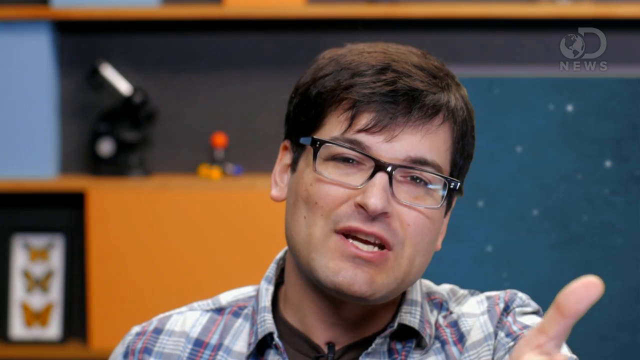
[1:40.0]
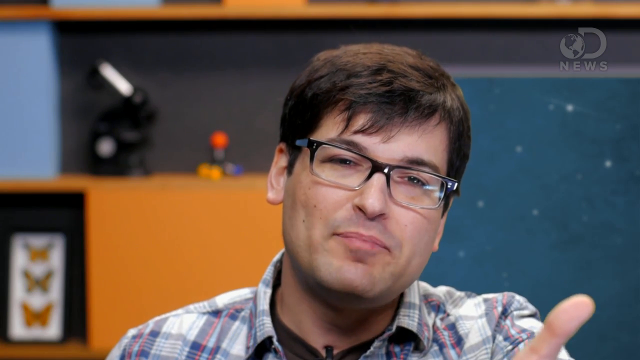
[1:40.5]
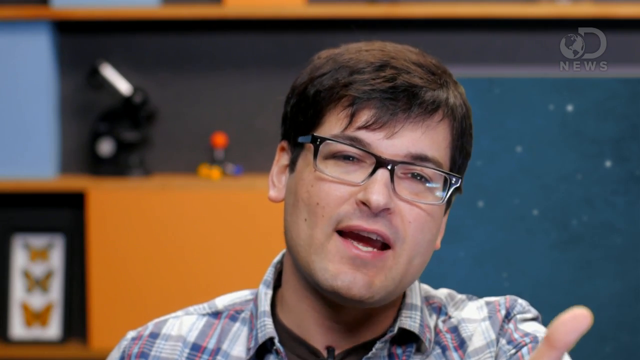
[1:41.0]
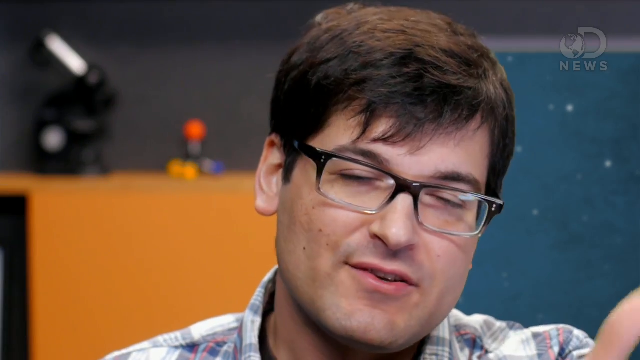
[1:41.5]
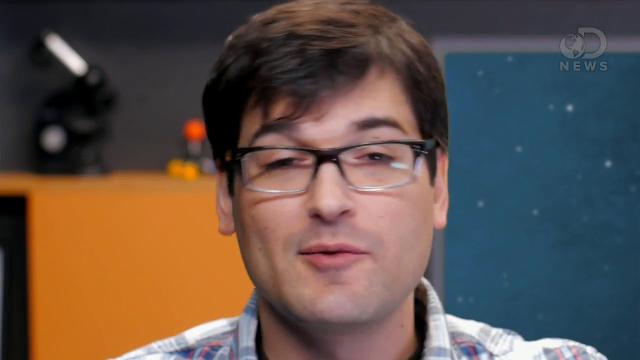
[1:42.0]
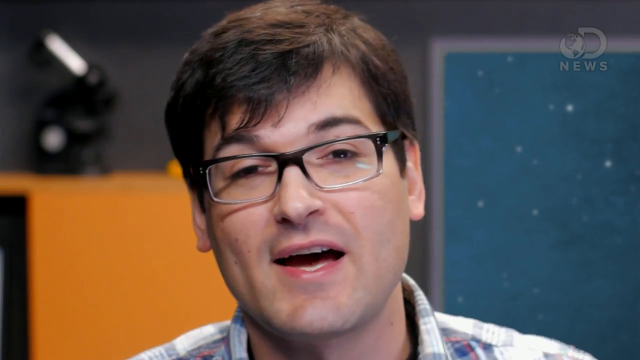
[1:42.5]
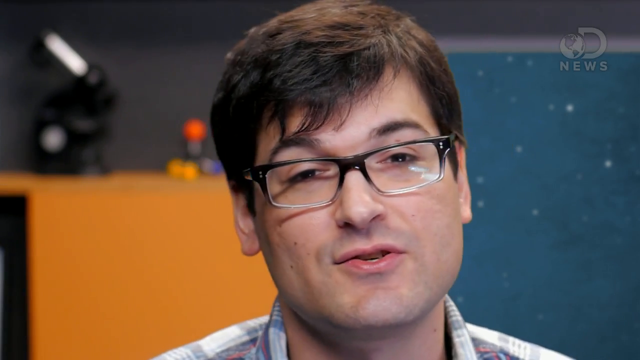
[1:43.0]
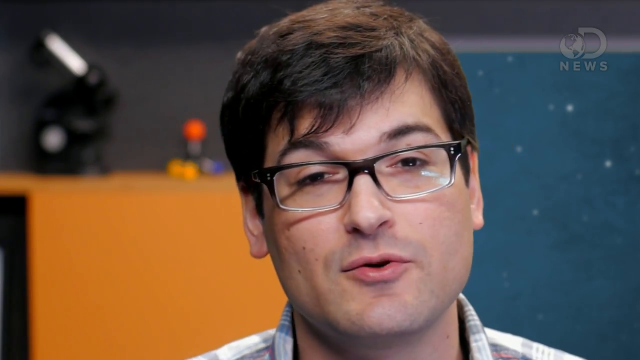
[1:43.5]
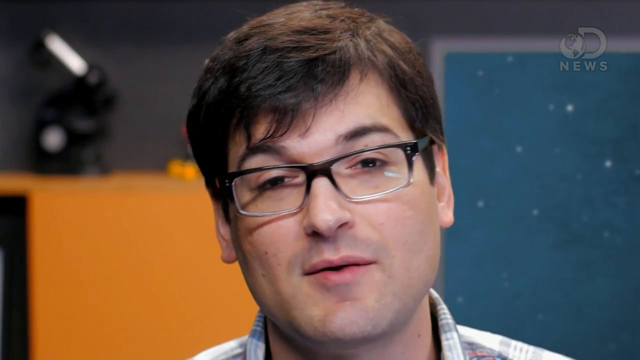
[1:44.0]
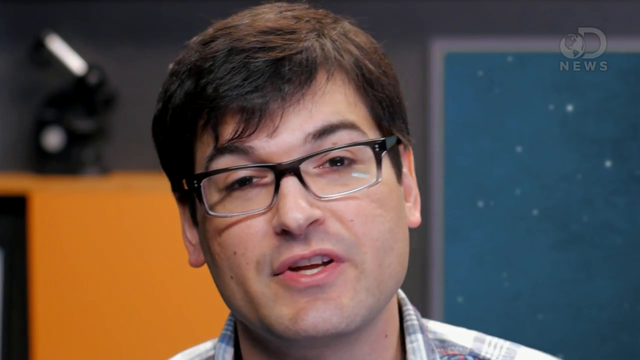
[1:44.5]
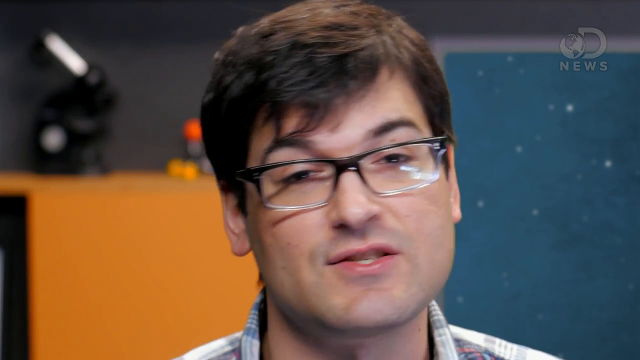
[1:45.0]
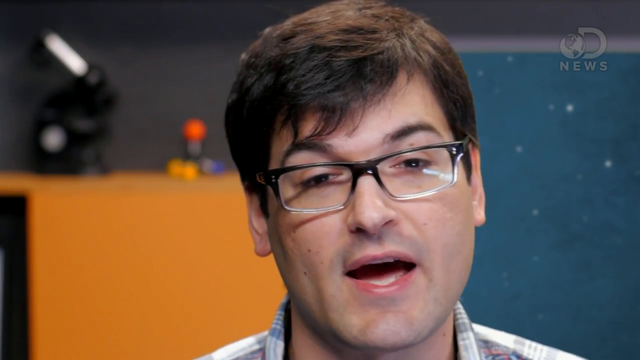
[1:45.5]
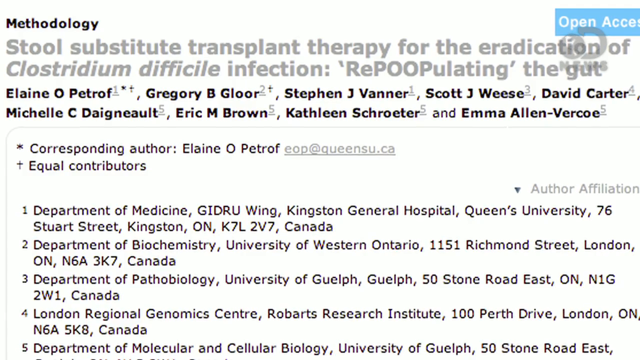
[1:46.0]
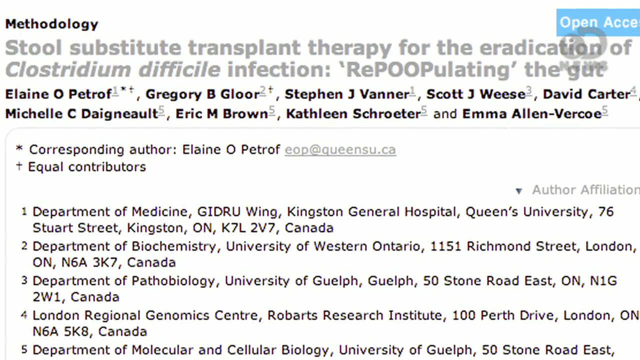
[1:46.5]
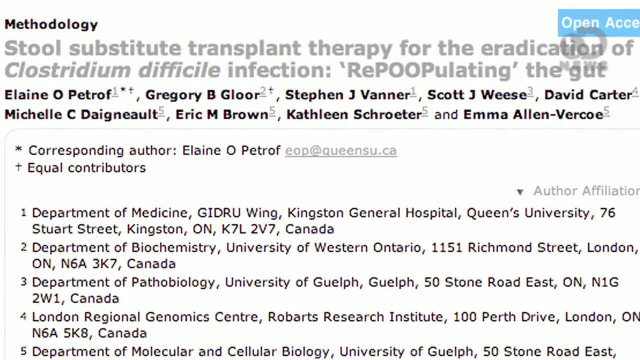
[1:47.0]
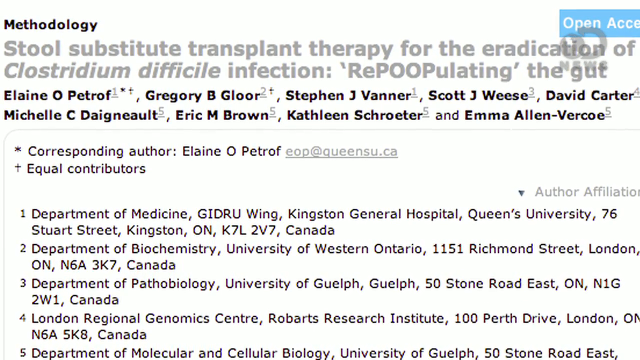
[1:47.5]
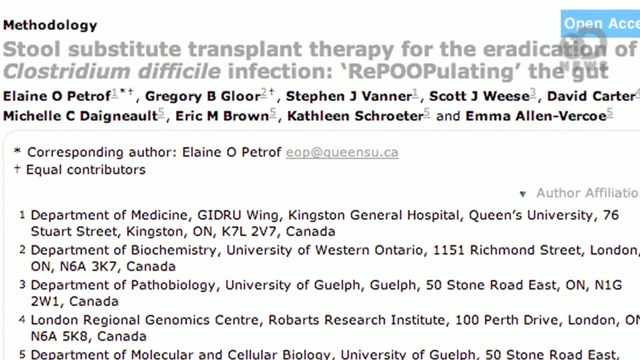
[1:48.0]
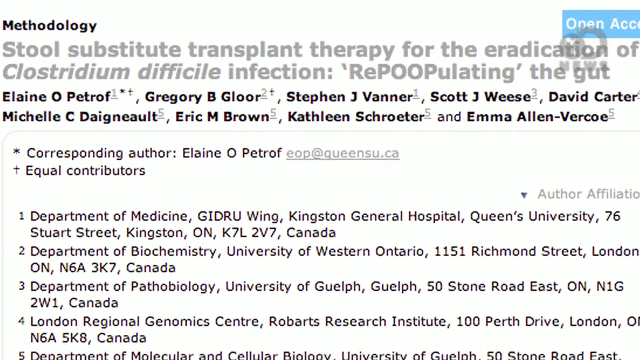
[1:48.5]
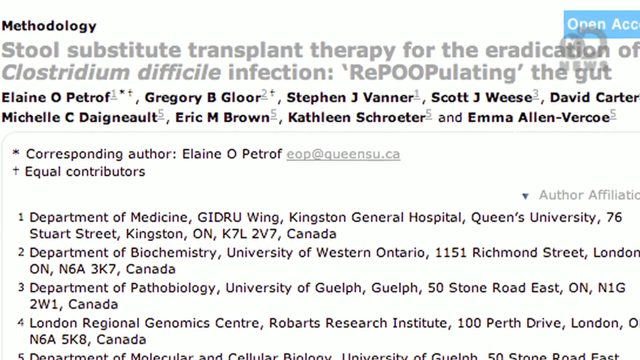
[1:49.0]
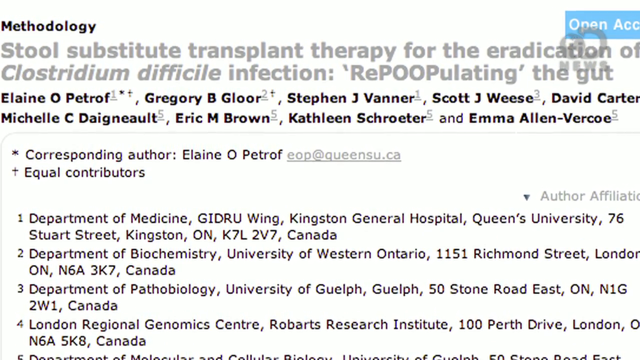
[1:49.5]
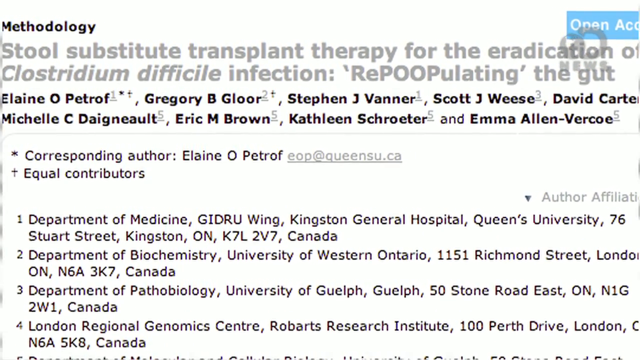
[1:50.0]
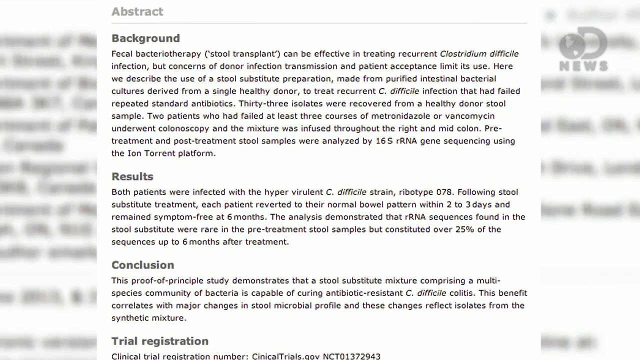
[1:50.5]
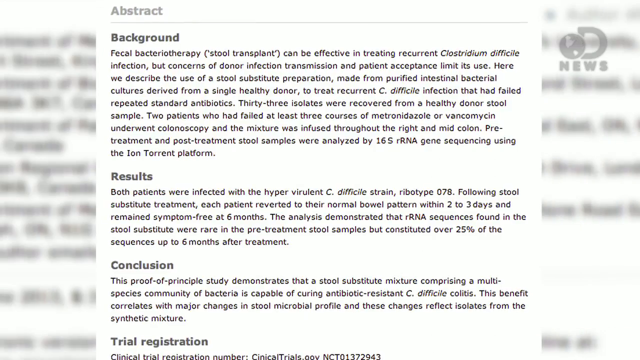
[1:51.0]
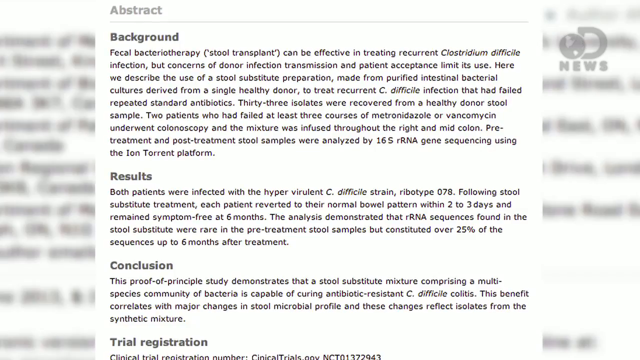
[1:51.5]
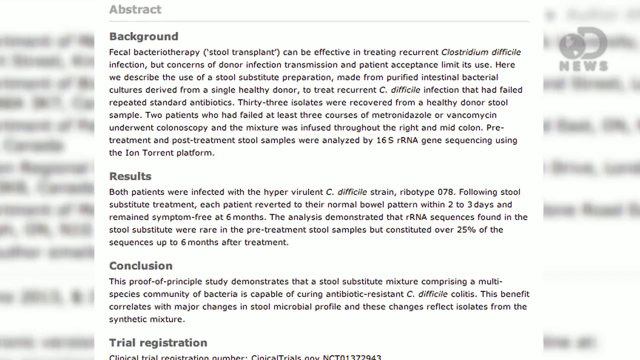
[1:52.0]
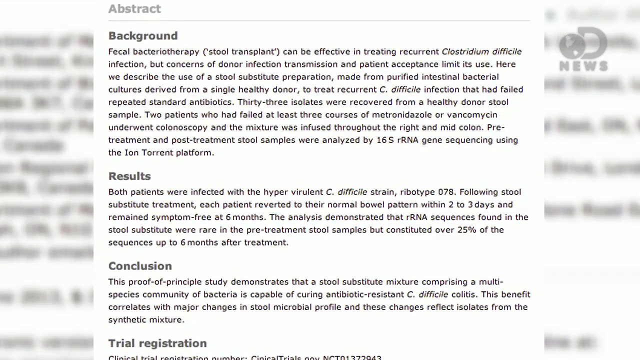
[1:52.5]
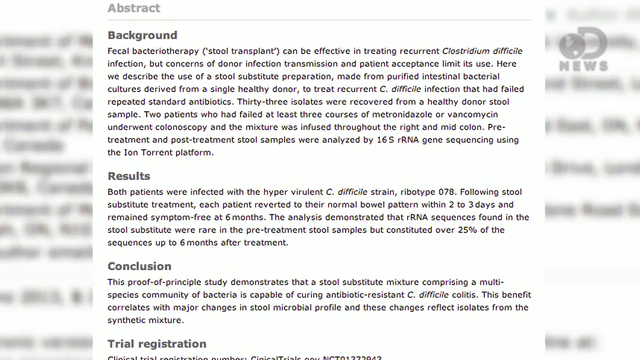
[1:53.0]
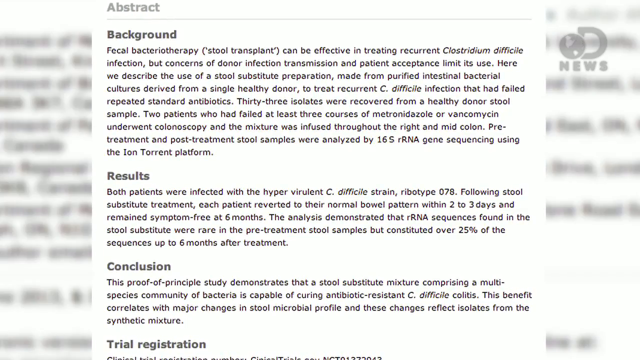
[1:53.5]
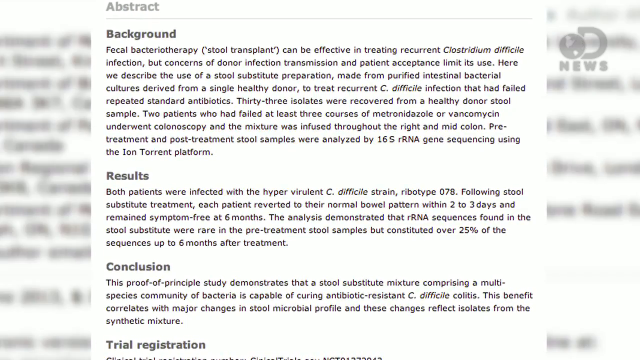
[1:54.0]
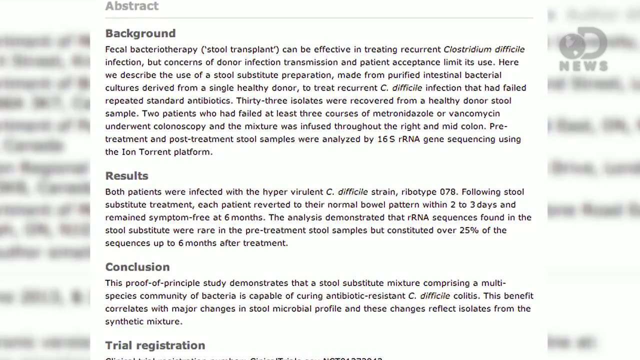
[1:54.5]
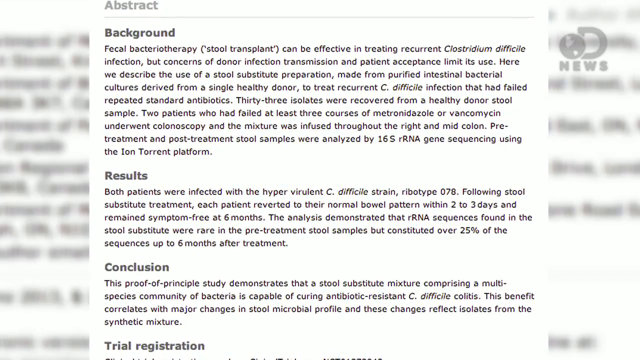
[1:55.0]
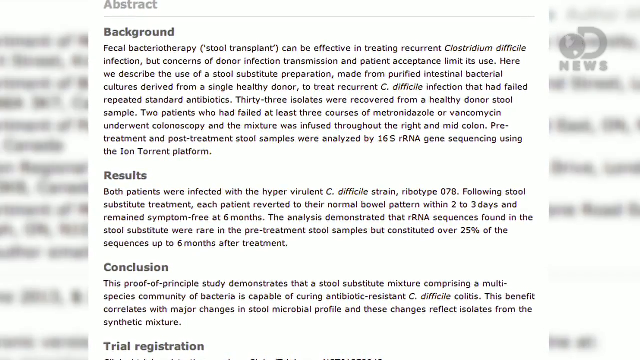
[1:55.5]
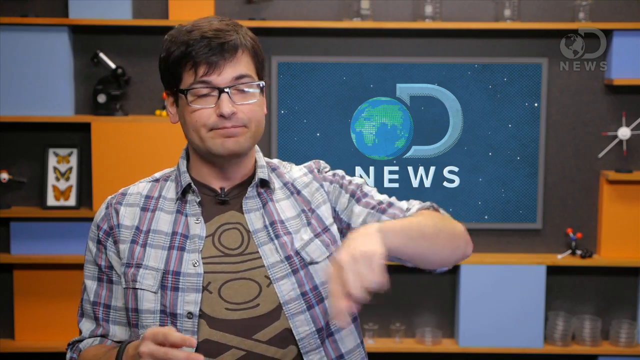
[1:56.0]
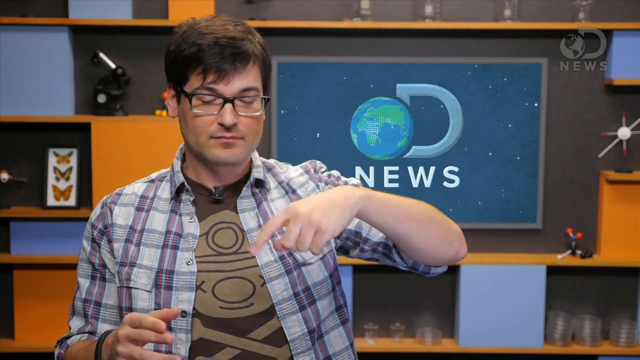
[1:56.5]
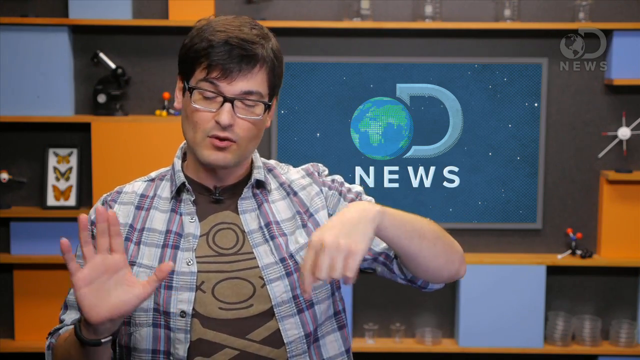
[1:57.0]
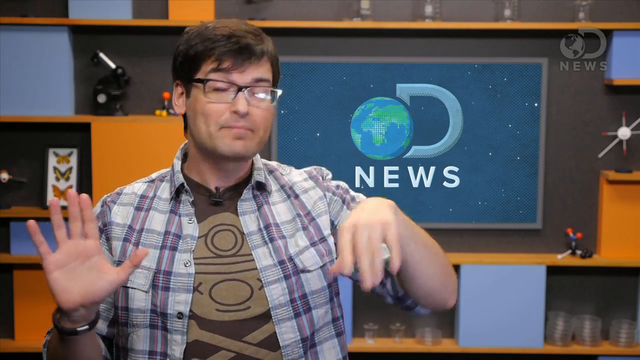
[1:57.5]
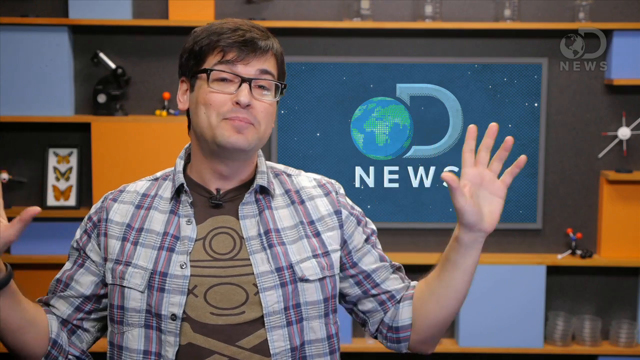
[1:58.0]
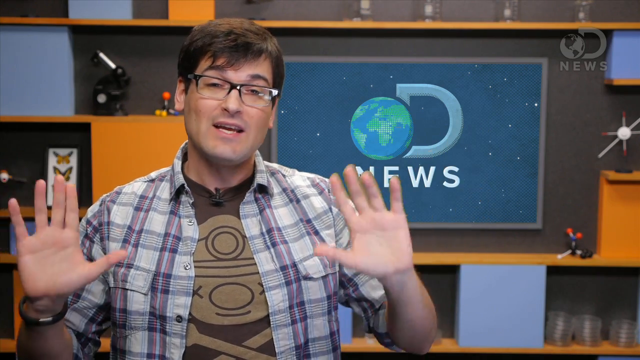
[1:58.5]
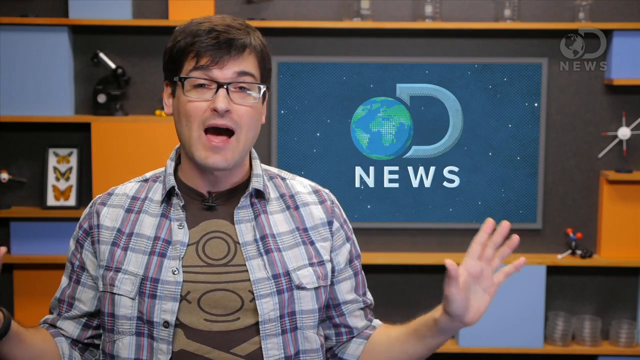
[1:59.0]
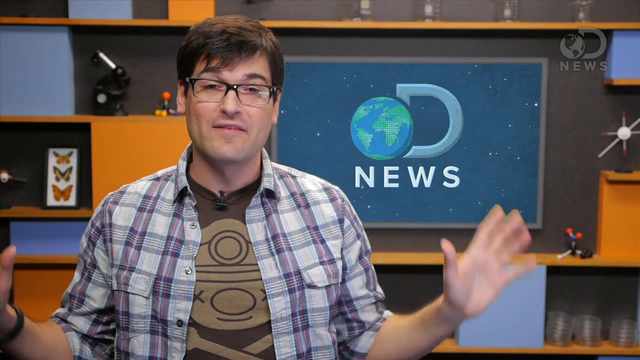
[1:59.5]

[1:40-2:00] Anthony Carboni is still speaking. His head tilts to the right and his mouth moves very quickly. An article pops up with "Methodology" at the top and, underneath, "Dual Substitute Transplant Therapy for Eradication of Clostridium Difficile Infection. Repoopulating the gut," followed by a list of names and then the sources. A part of the article then shows the background, results, and conclusions of the study. Back on Anthony Carboni, his left hand is up with the finger pointing down, moving in a circular motion, while his right hand has all its fingers out, pointing toward the screen. He then puts both hands up in front of his chest, palms facing the camera, and moves them in a circular motion.